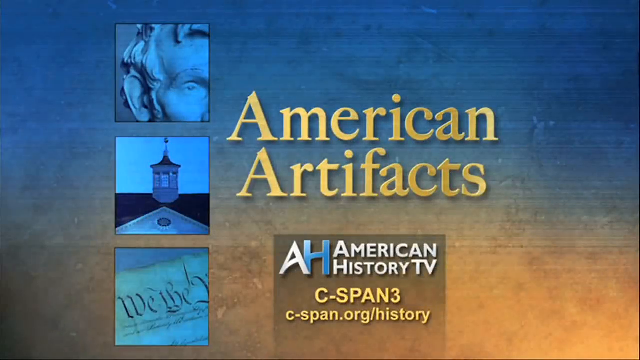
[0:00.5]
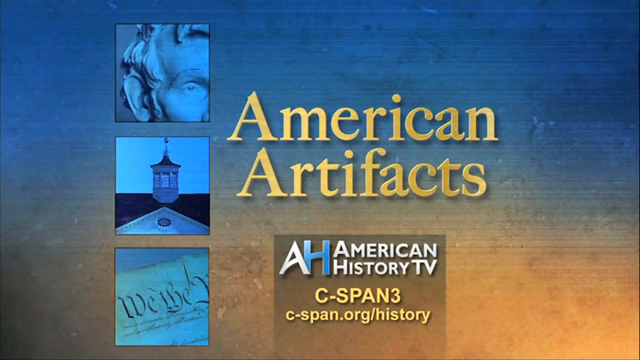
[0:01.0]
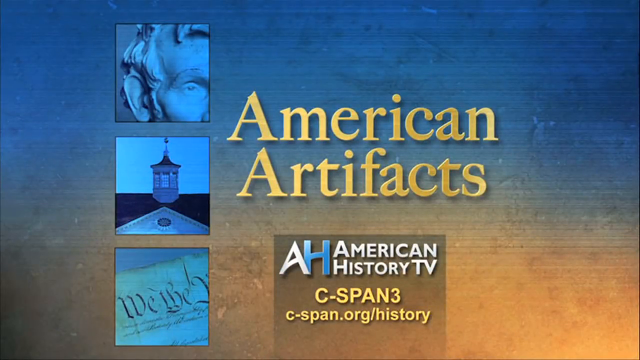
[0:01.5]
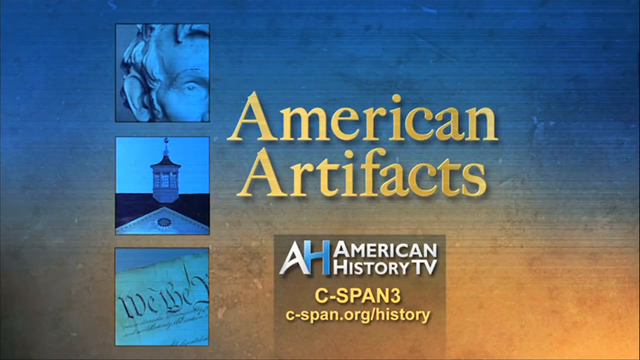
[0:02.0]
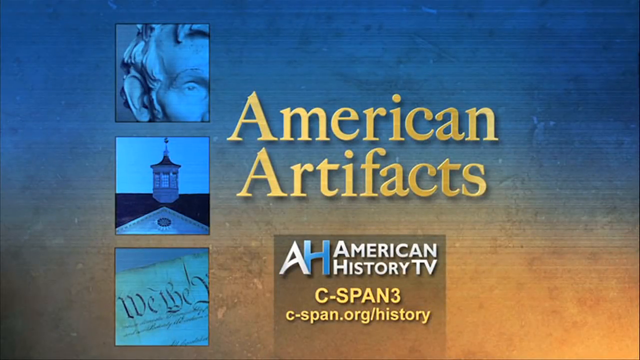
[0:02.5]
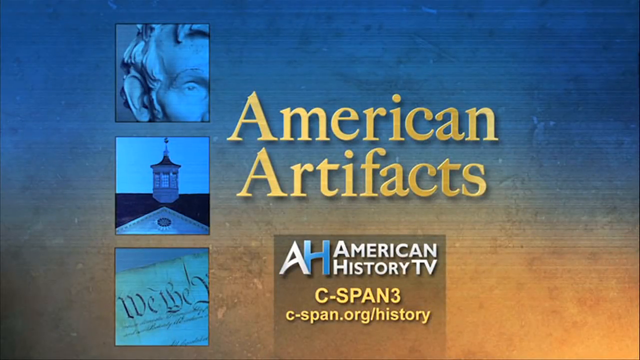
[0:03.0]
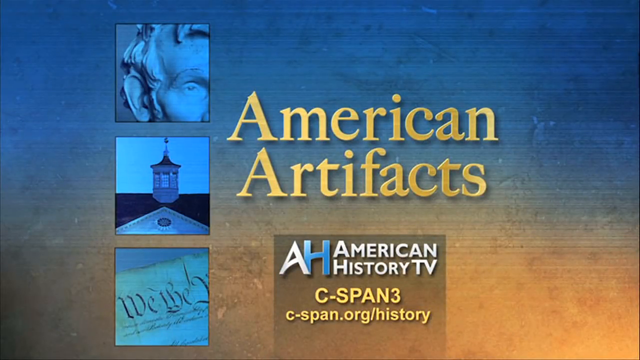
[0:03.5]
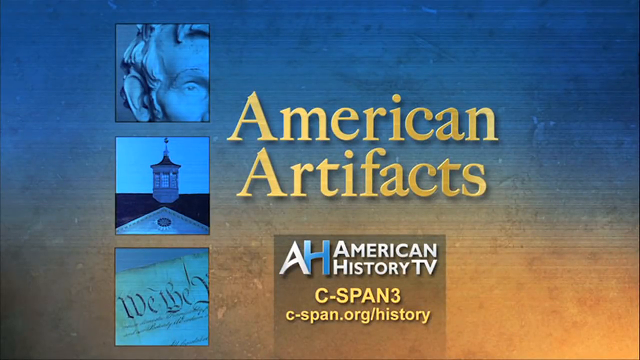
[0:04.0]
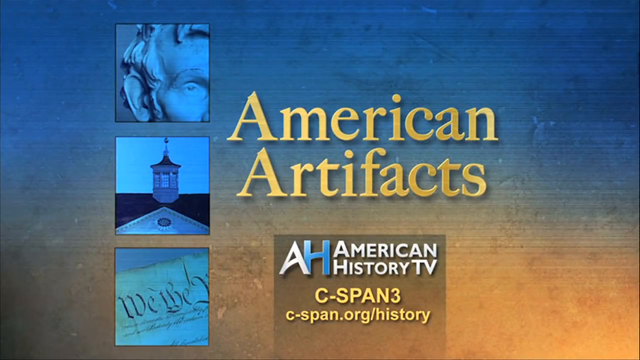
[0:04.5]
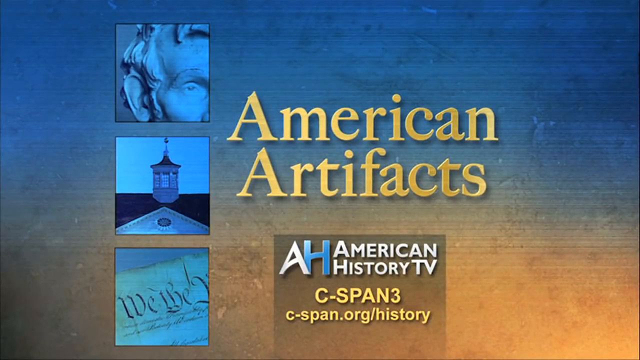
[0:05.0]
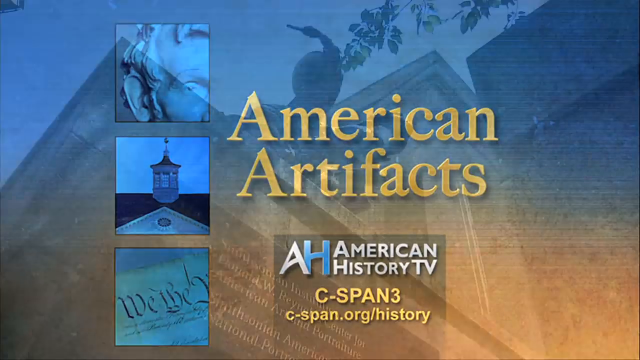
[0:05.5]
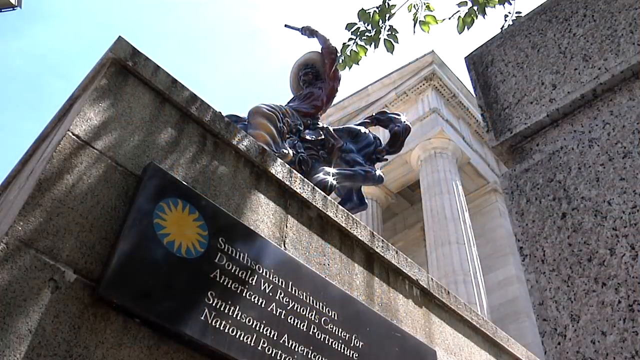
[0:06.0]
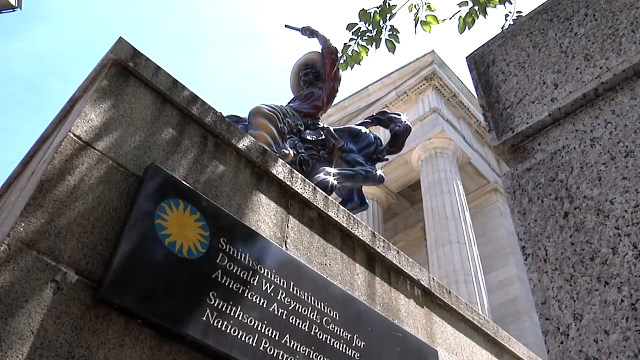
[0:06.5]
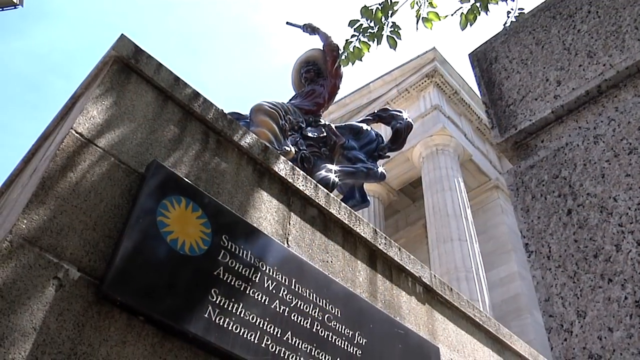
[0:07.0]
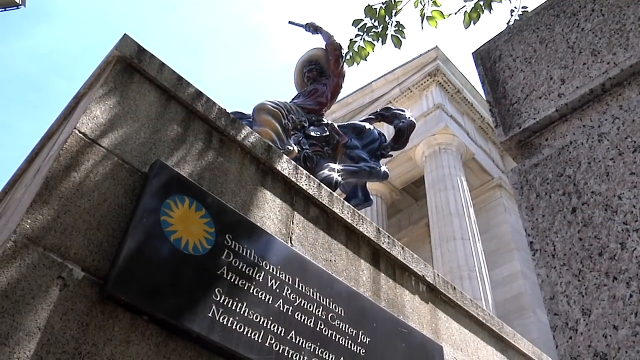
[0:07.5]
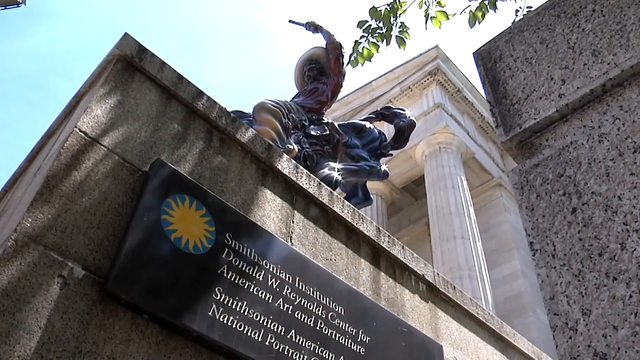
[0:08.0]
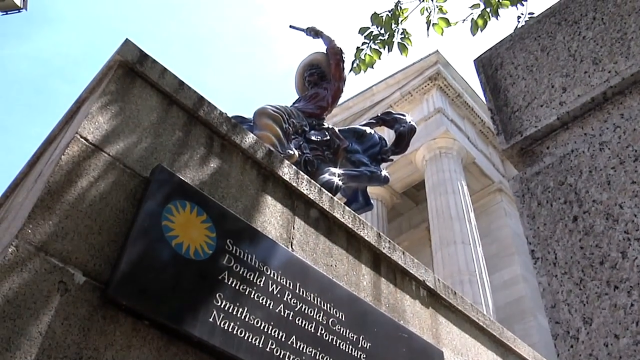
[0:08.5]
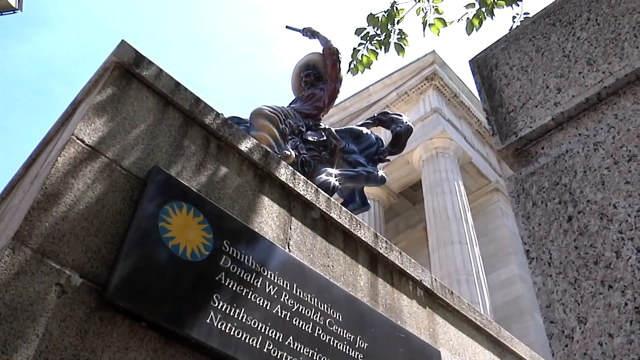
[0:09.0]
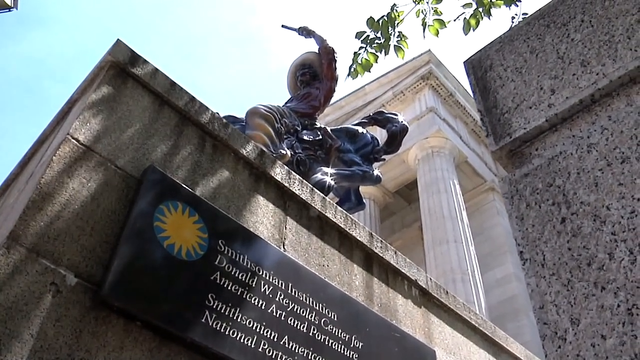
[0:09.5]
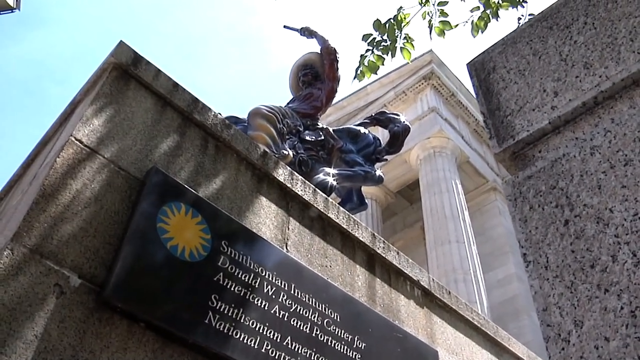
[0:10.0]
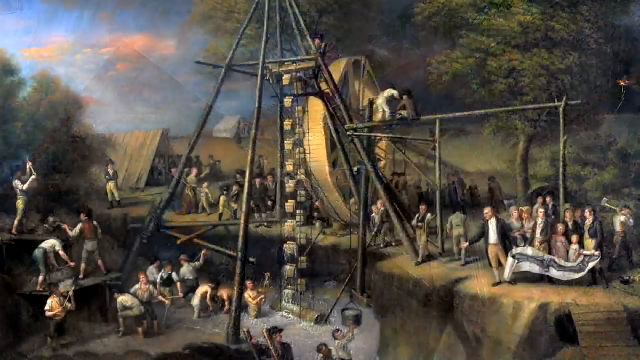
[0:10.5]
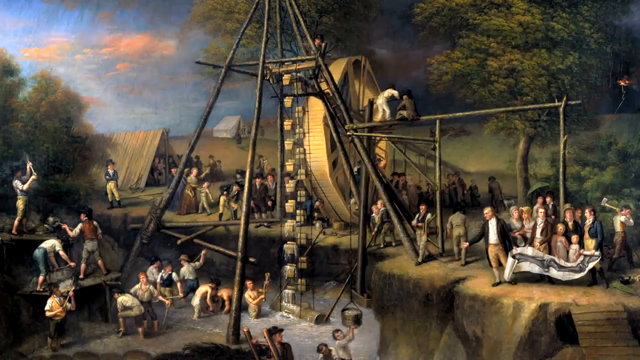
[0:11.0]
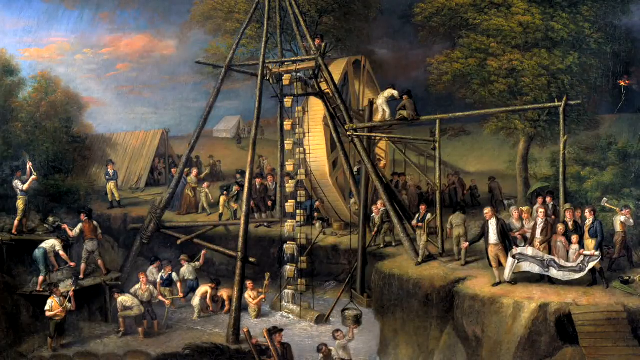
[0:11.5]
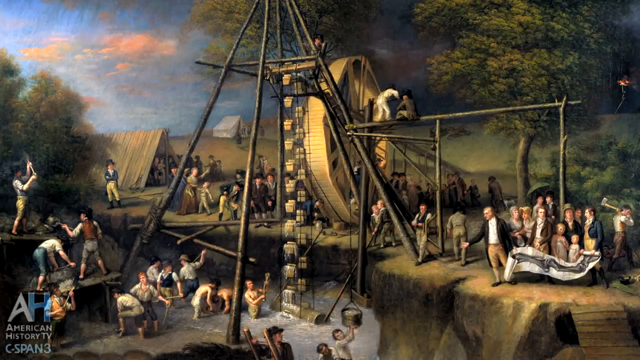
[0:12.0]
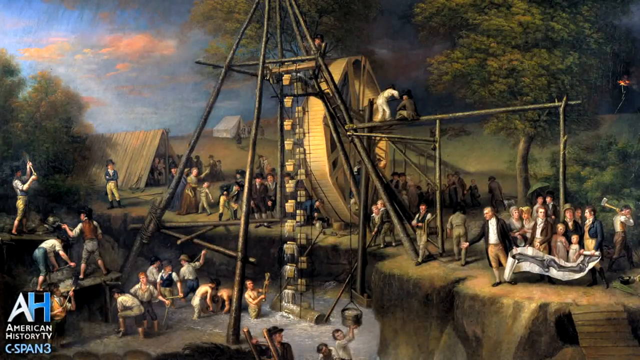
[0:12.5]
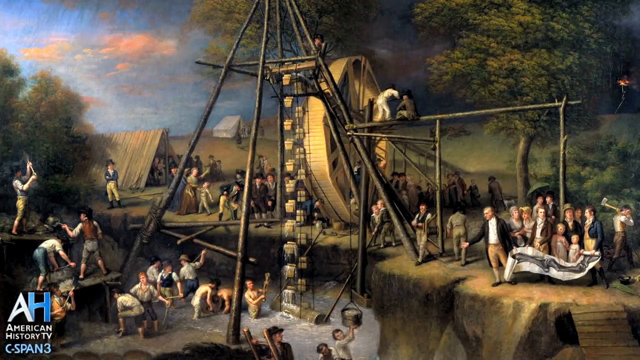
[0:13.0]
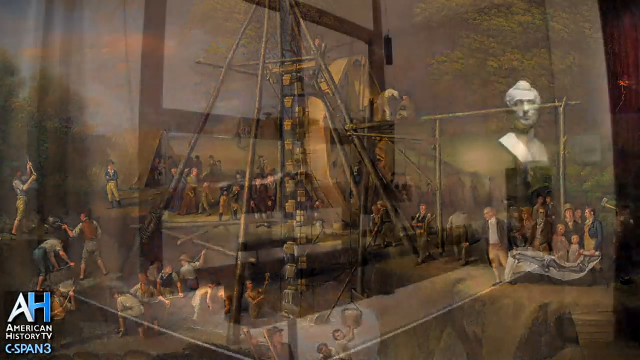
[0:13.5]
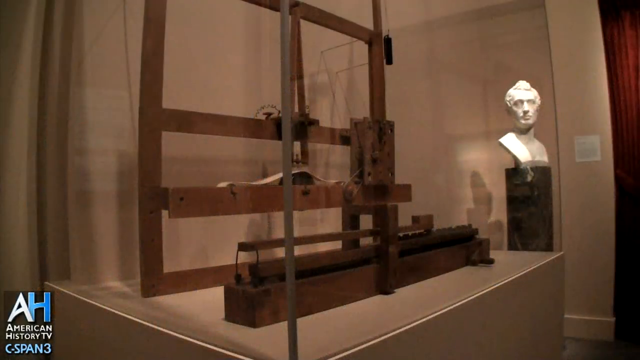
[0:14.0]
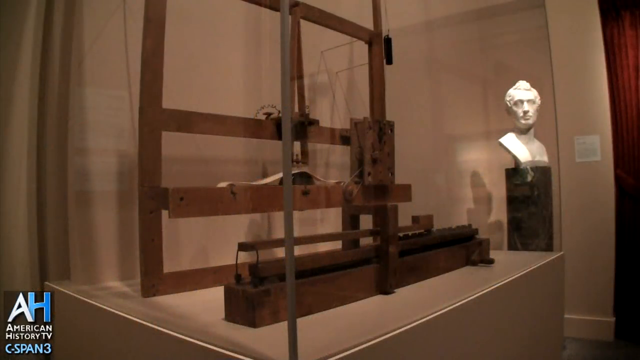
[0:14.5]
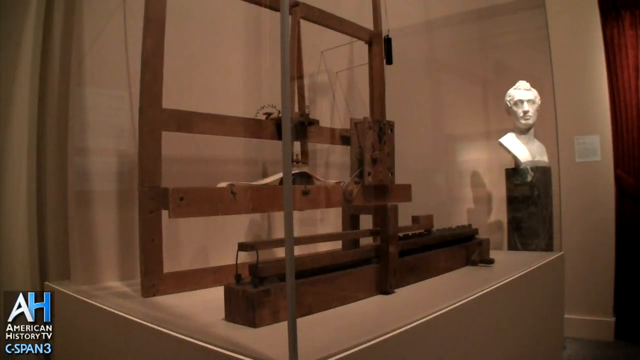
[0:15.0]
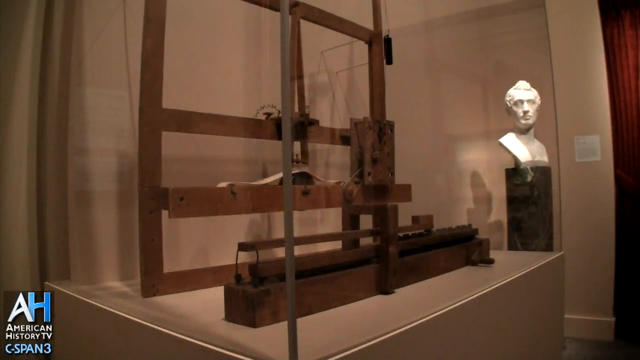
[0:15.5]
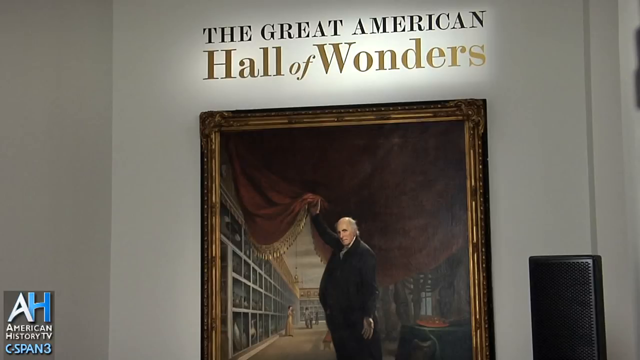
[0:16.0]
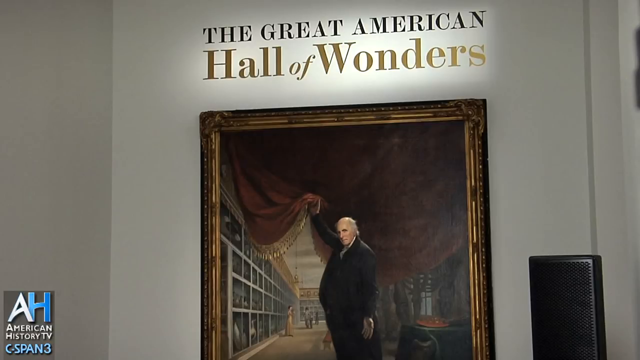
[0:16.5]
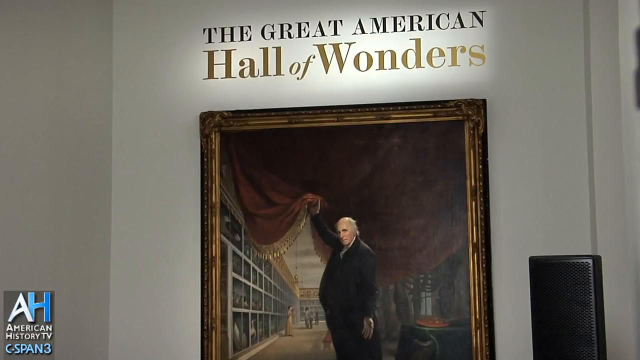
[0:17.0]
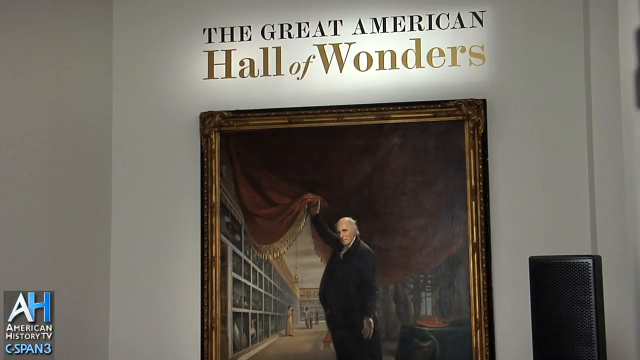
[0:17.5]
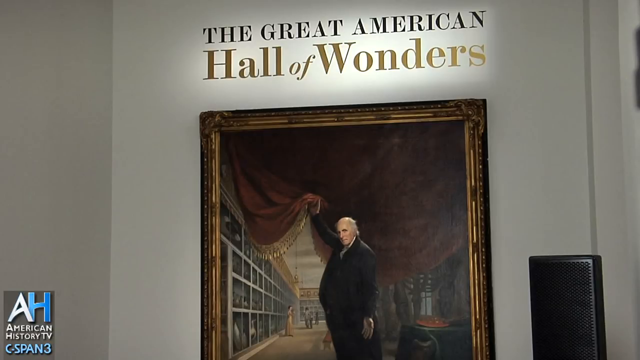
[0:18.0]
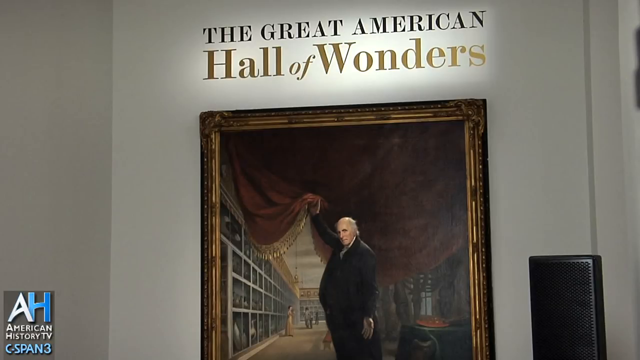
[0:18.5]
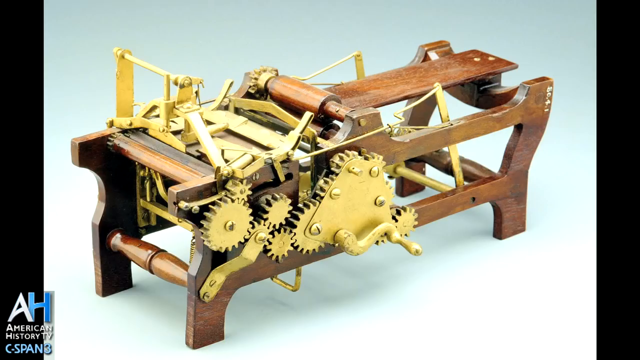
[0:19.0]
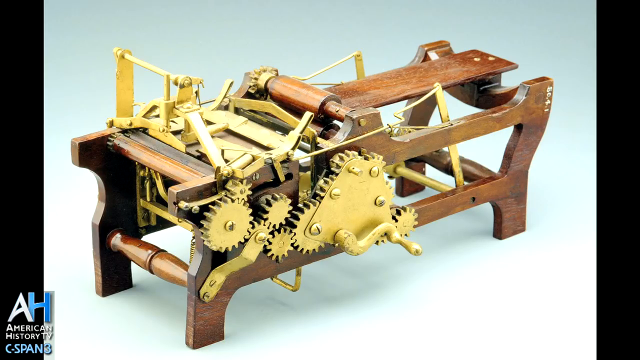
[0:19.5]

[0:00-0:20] On-screen text reads "American Artifacts," "American History TV" and "cspan.org/history." The Smithsonian Institution is shown from the outside, with a statue of a man on a horse, probably a Remington cast bronze. Inside the museum there is a picture of some devices; one is like a water wheel, something that could pull water out of a river, and it looks like it is from the 18th century. Next comes something made entirely of wood, apparently a type of press, with a screw mechanism to press something down. Text then reads "the Great American Hall of Wonders," and an unidentified contraption is shown: it is wooden, with brass fittings all over it and all kinds of dials, cranks and buttons.